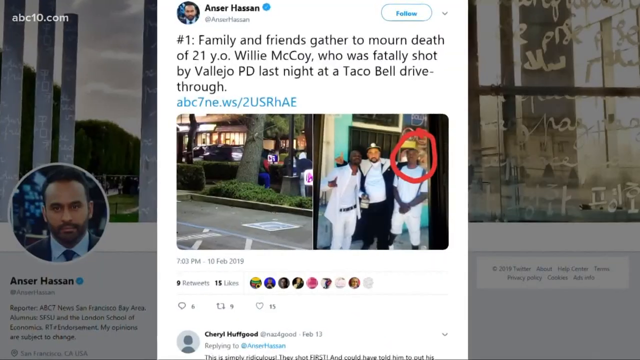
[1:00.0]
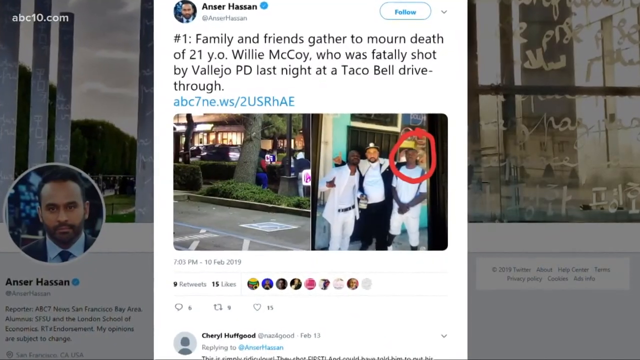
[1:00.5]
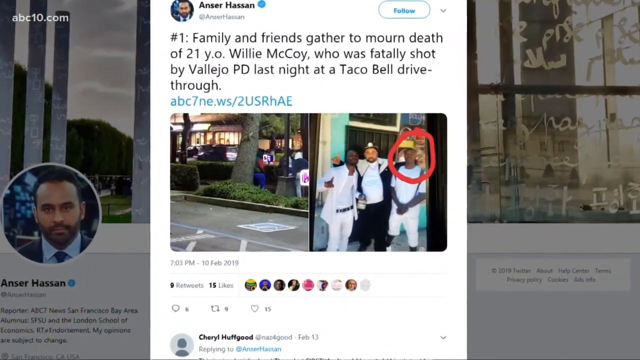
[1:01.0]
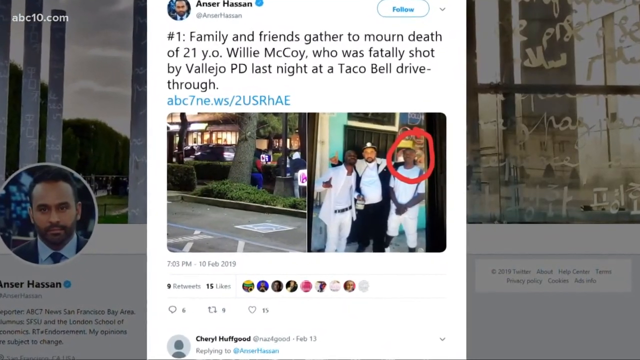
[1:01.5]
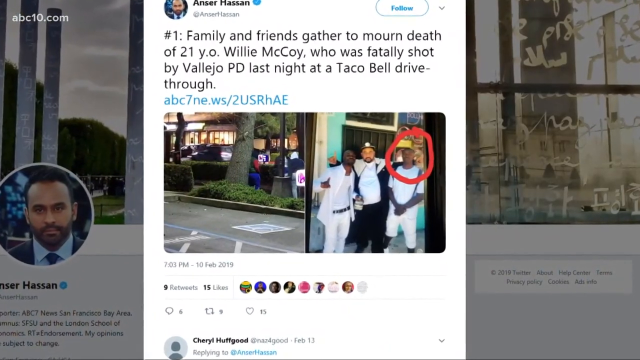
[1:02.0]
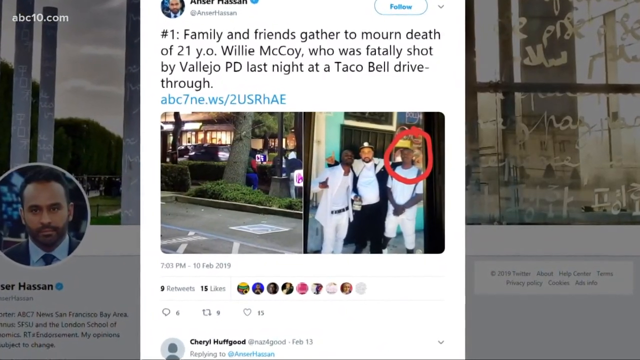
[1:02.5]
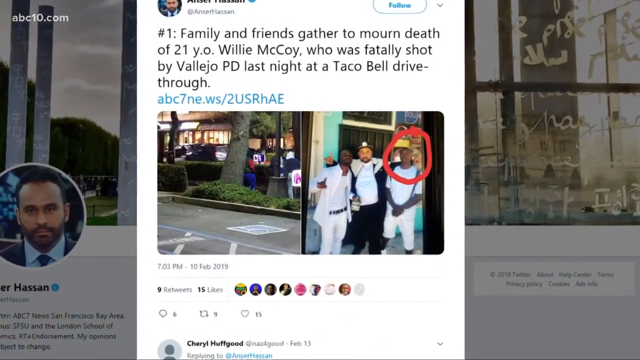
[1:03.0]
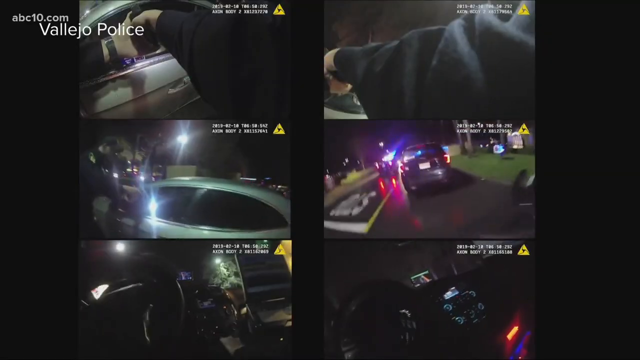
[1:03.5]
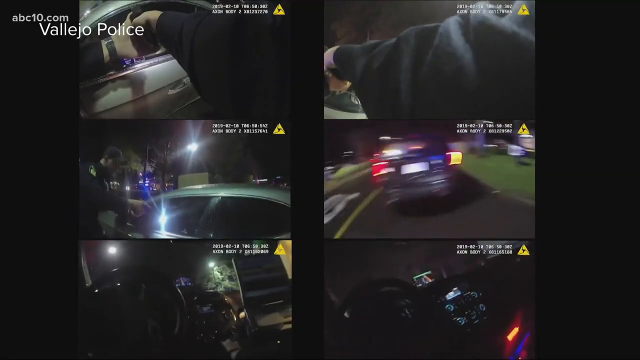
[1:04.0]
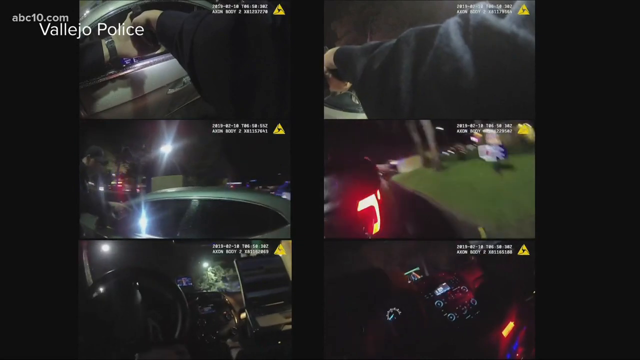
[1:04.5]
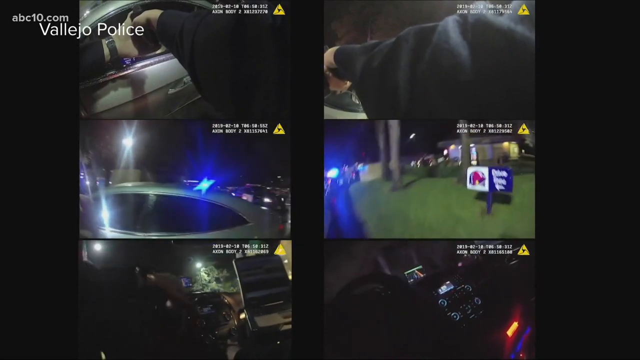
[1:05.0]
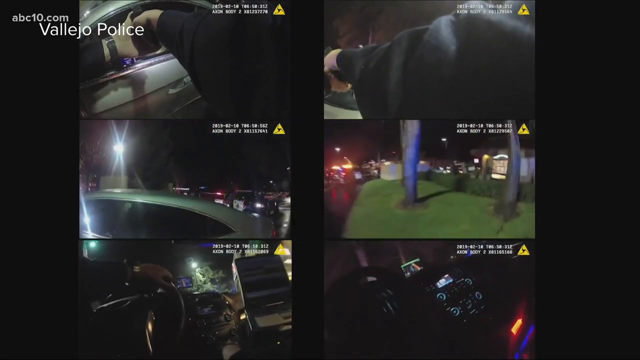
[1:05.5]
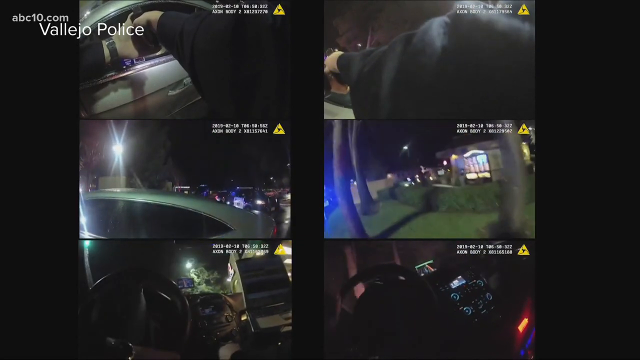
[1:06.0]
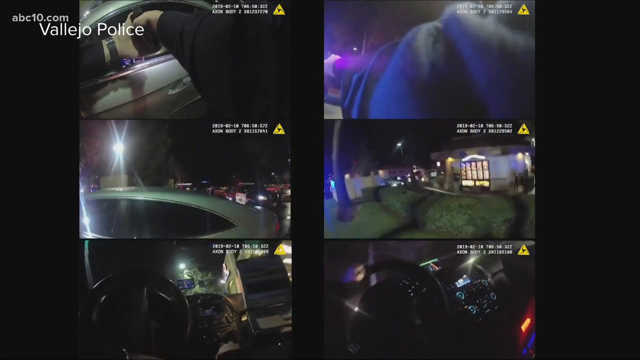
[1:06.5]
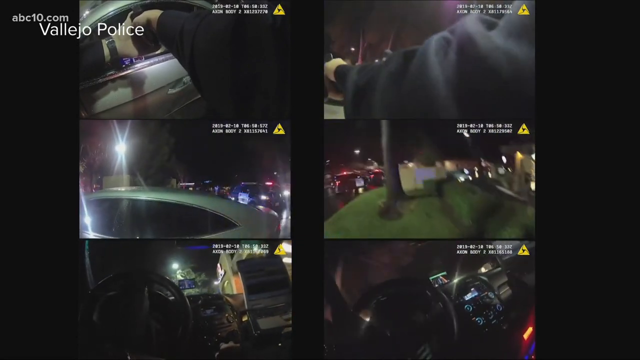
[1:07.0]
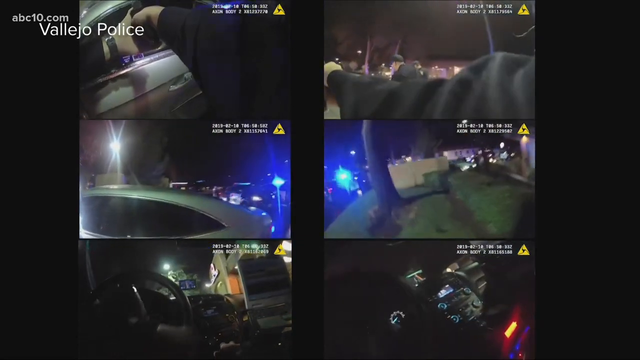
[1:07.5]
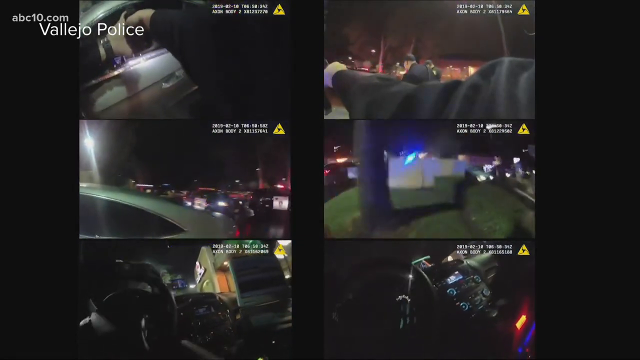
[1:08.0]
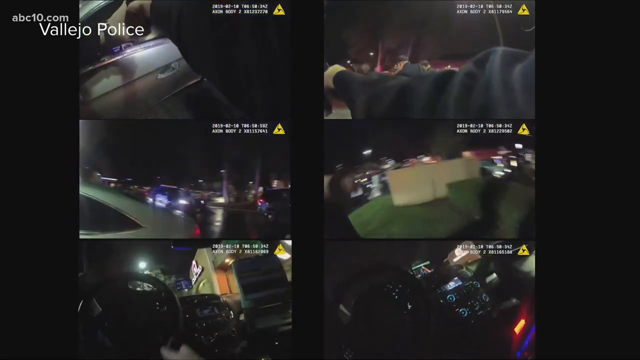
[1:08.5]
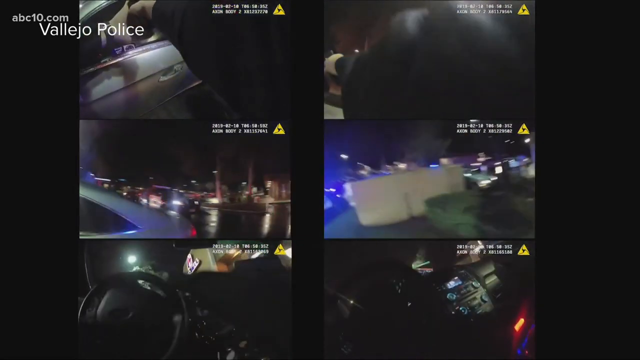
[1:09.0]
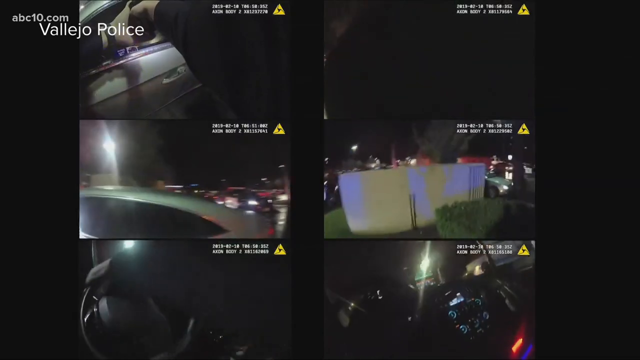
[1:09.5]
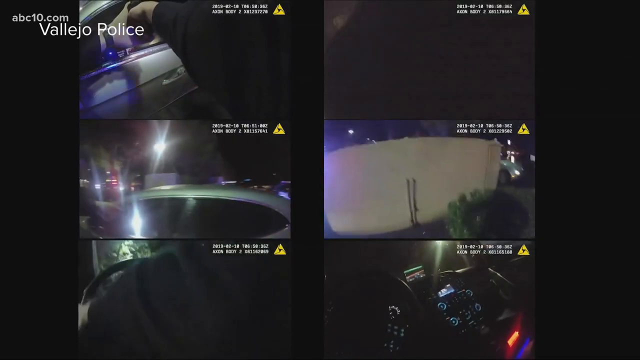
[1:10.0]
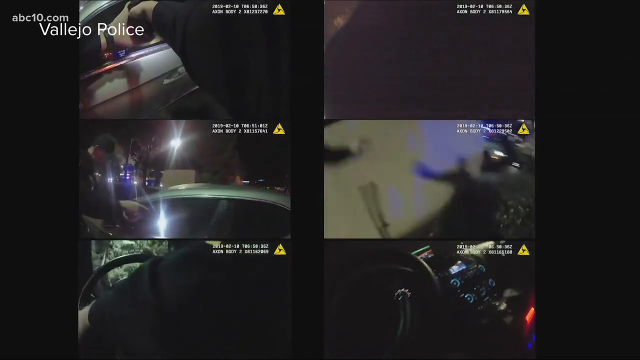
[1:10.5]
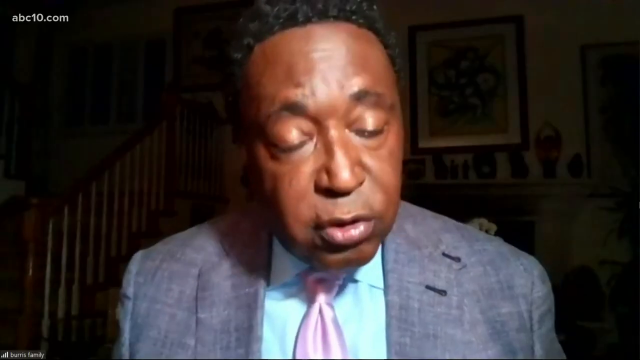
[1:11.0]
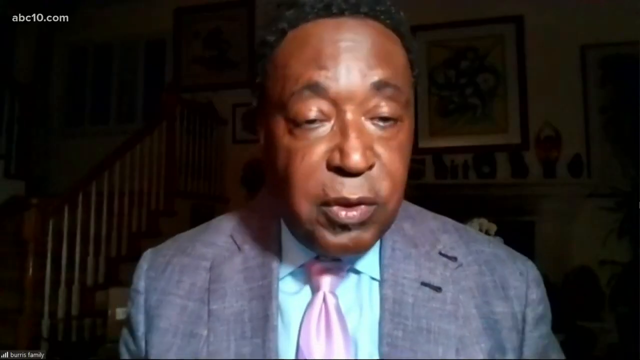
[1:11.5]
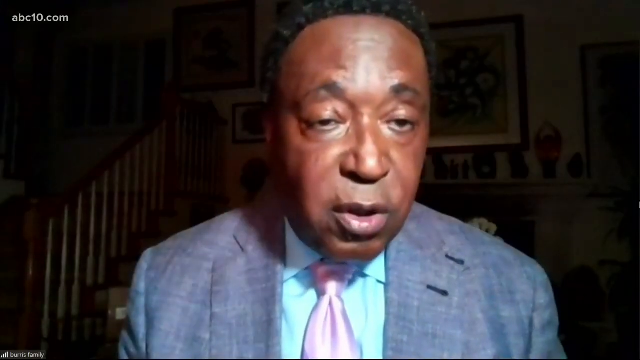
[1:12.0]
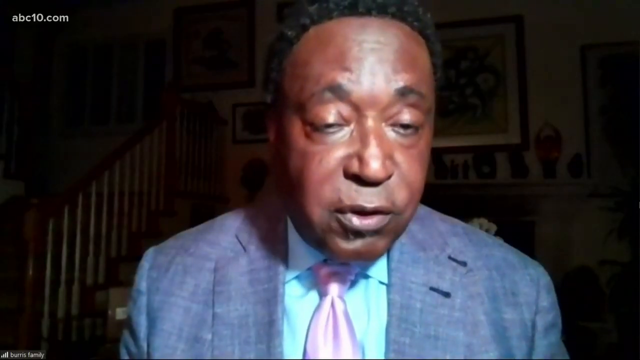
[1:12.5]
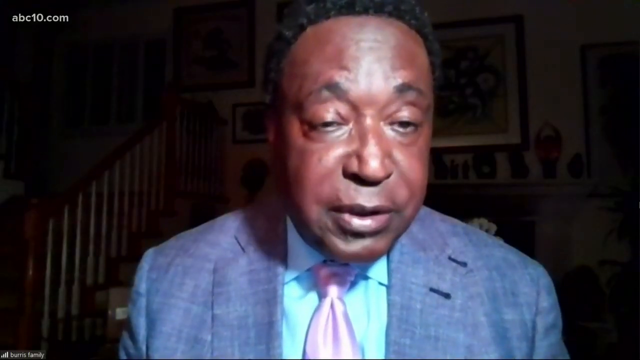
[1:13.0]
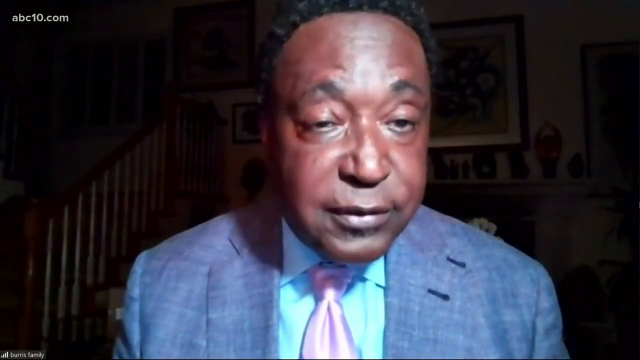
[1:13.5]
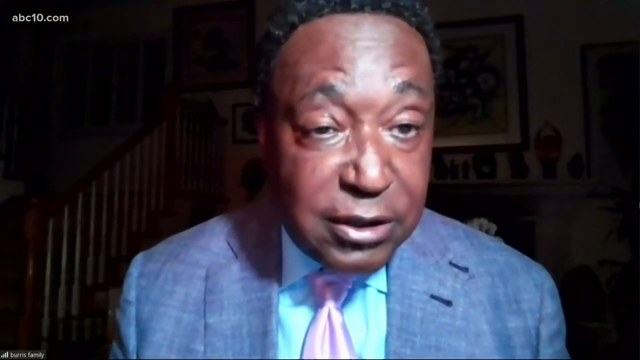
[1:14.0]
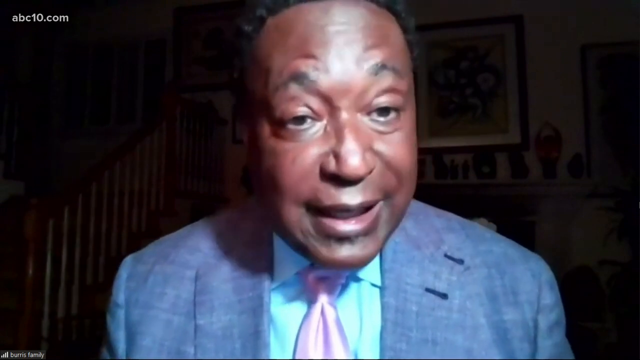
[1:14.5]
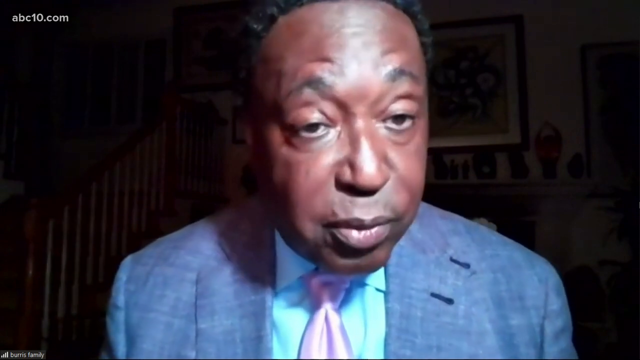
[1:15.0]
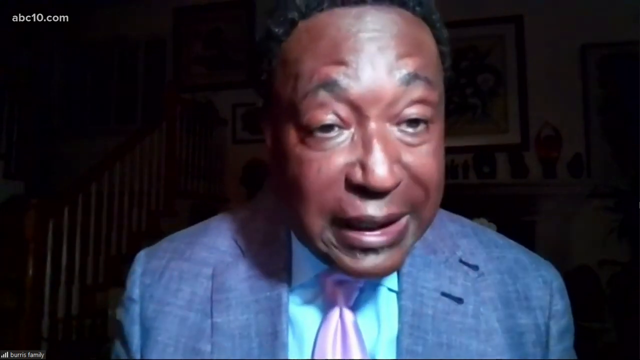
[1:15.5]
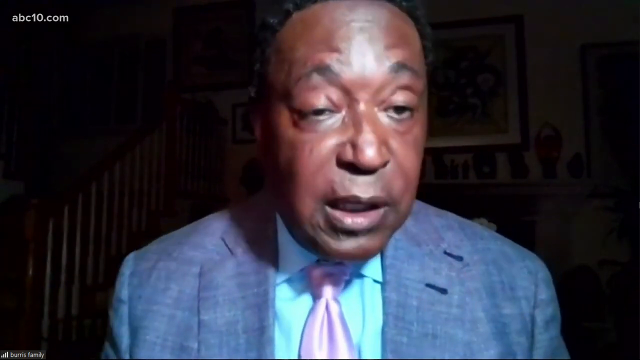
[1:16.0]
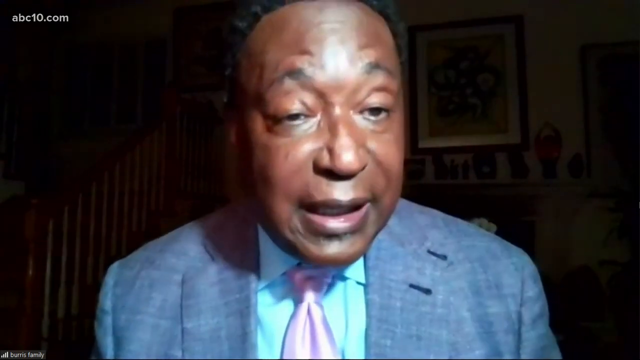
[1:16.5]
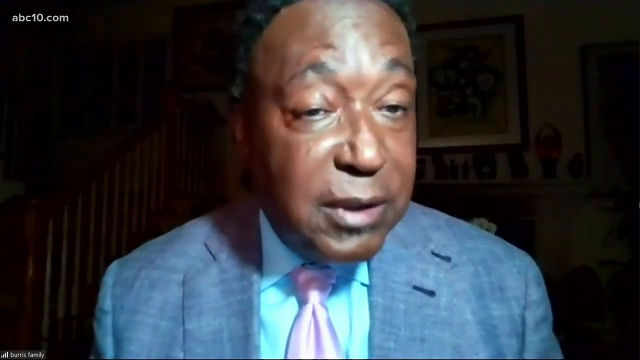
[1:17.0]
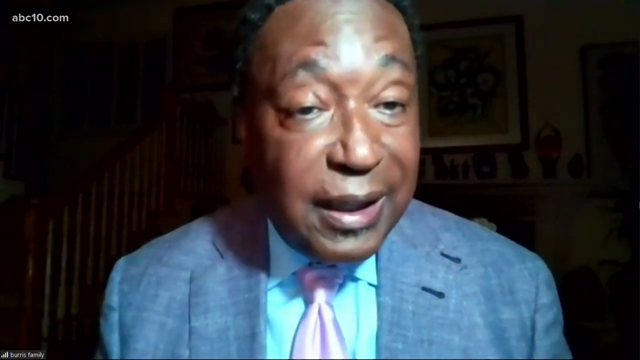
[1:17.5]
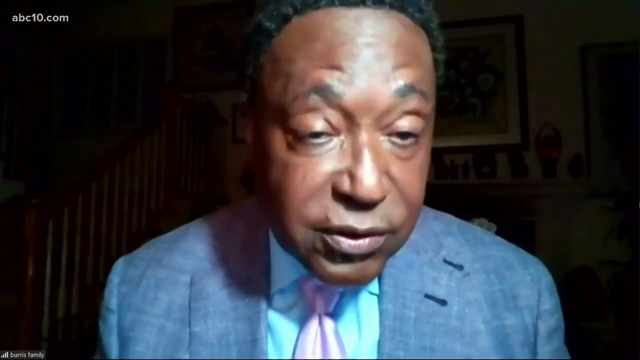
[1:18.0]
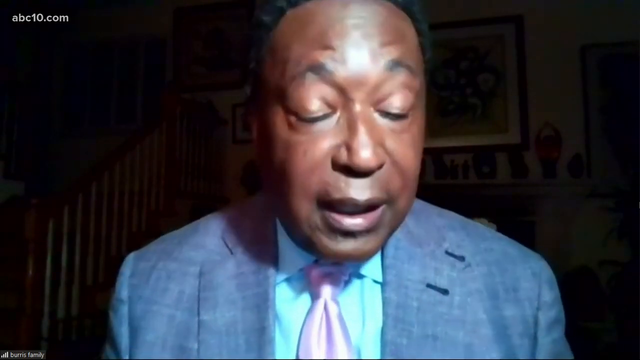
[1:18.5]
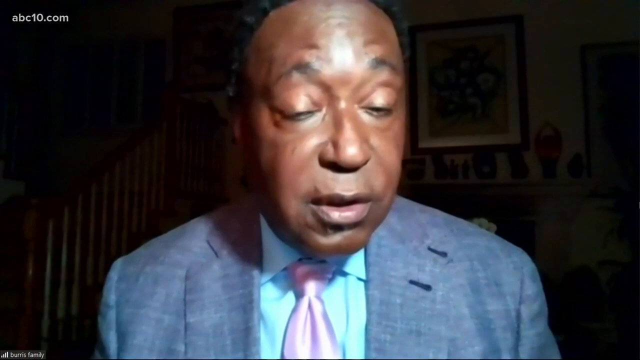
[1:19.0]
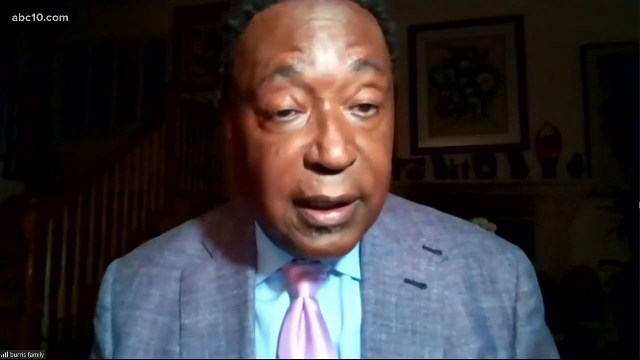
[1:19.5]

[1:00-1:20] The video shows a screen capture from Twitter. A Twitter profile is in the background, darkened and dimmed a little, and in the foreground is a bright screen capture of a tweet from Ansar Hassan that says "Number one, family and friends gathered to mourn the death of 22-year-old Willie McCoy, who was fatally shot by VA and OPD last night at a Taco Bell drive-thru." Under that is an ABC7 news link, and there are two images at the bottom. The left one looks like an image of a parking lot; the right one shows three men standing and taking a picture together, with a red circle around the man on the right, apparently indicating he was the one who was killed. The camera kind of zooms in on the right image. It then cuts to two large rectangles filled with smaller rectangles: six pieces of police camera footage. In one, a police officer filming from his body cam is running through what looks like a Taco Bell sign toward the drive-thru of the Taco Bell.